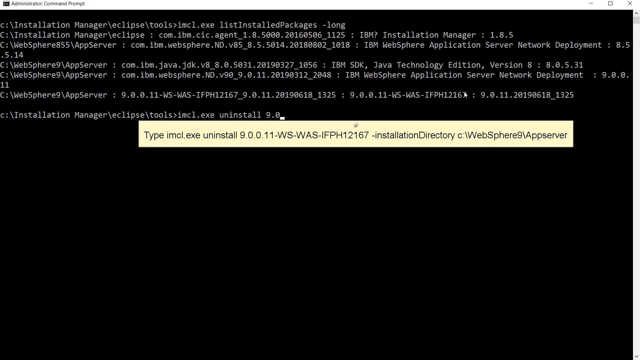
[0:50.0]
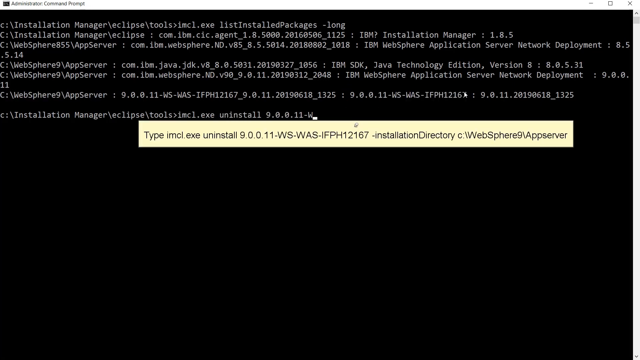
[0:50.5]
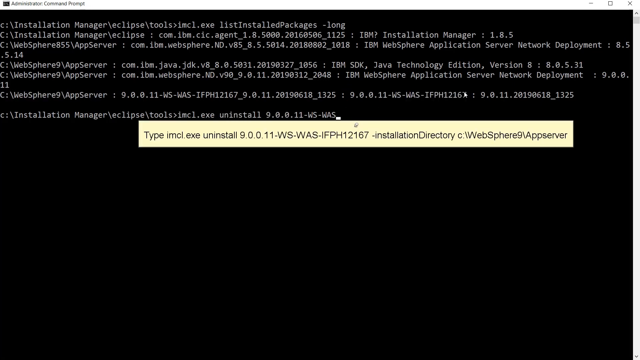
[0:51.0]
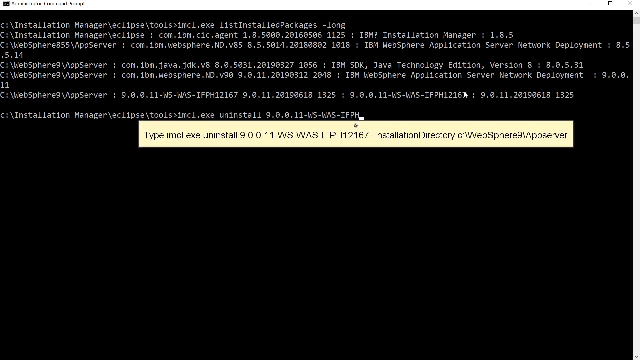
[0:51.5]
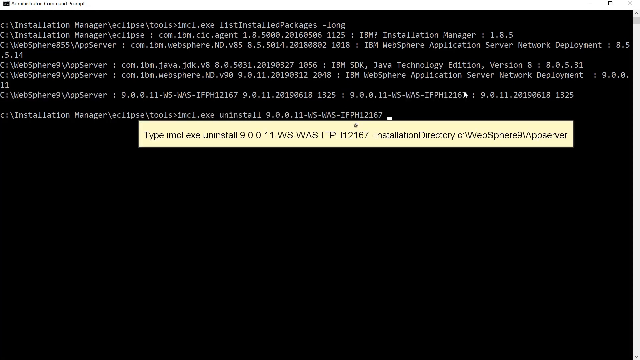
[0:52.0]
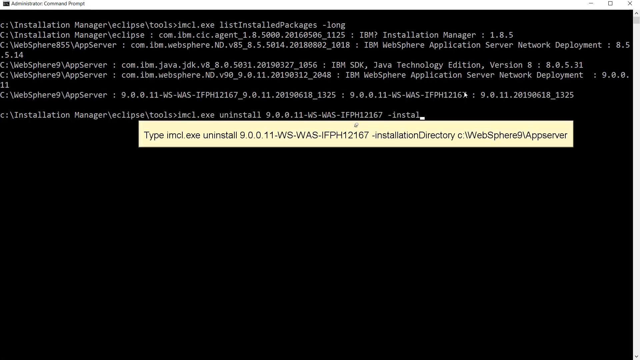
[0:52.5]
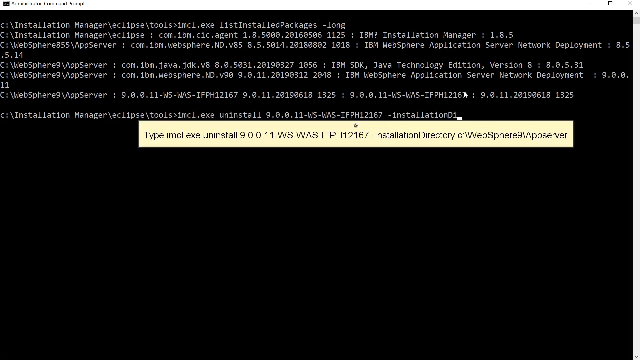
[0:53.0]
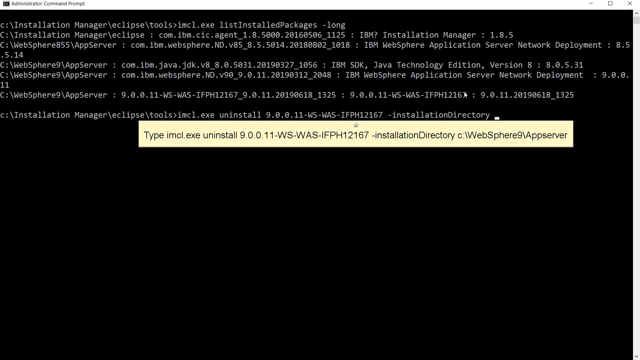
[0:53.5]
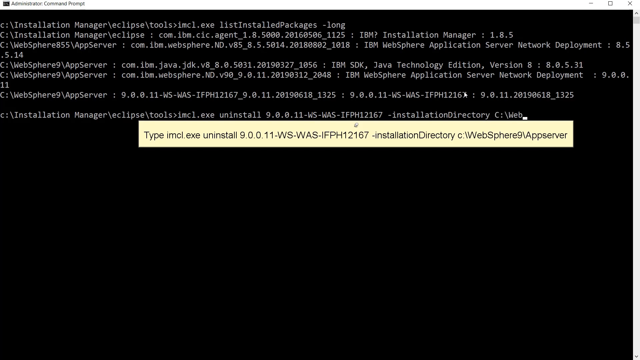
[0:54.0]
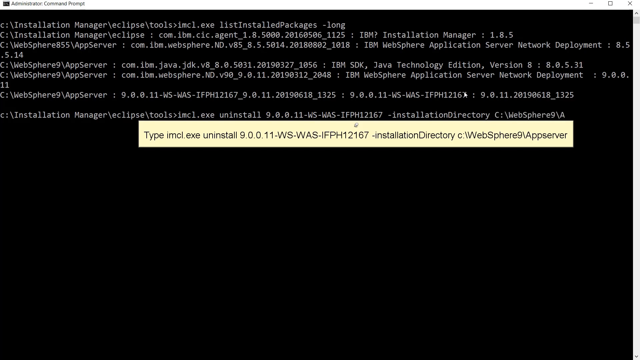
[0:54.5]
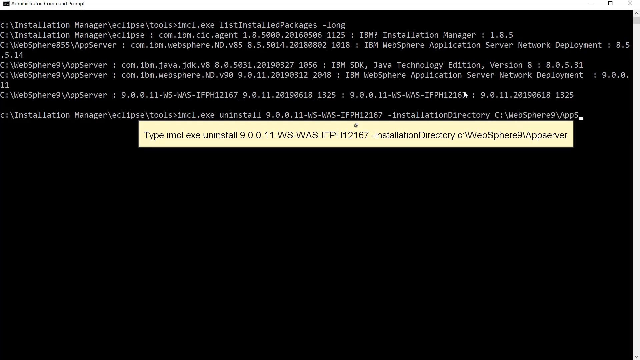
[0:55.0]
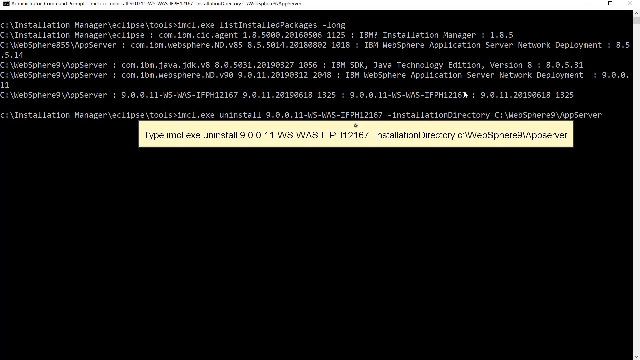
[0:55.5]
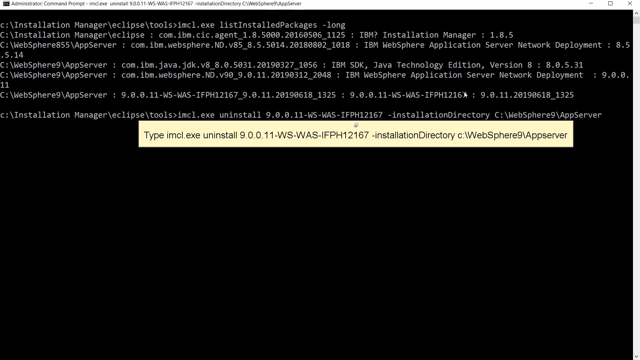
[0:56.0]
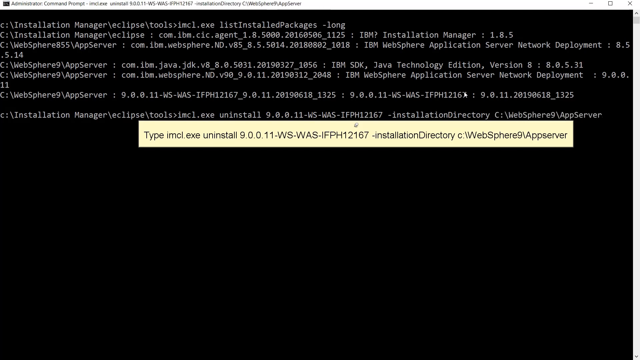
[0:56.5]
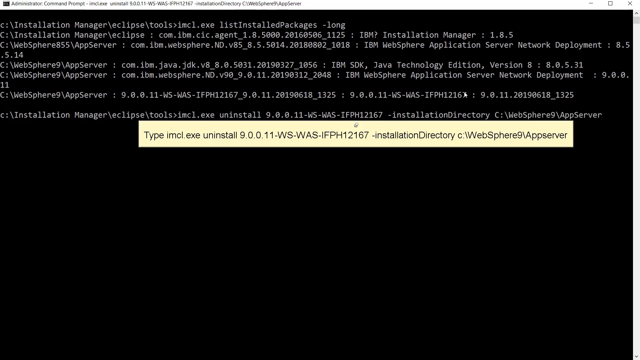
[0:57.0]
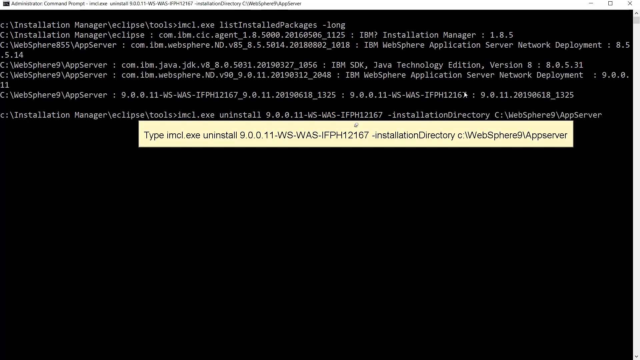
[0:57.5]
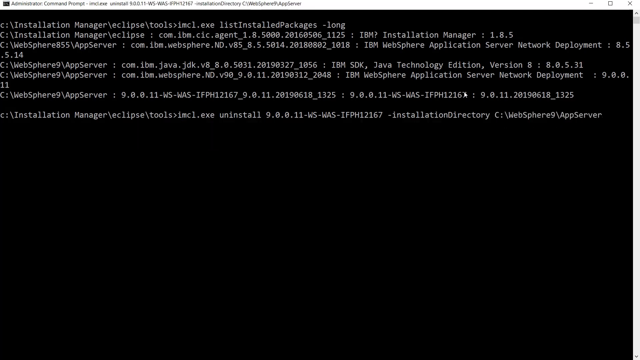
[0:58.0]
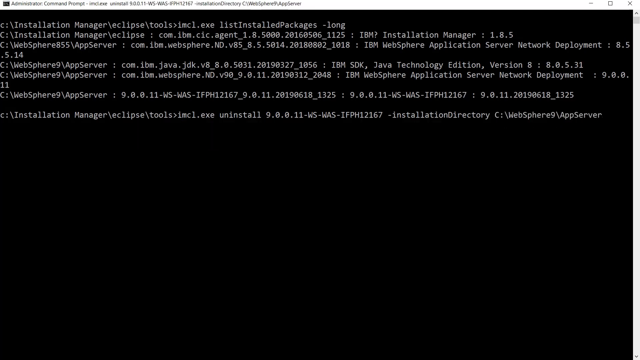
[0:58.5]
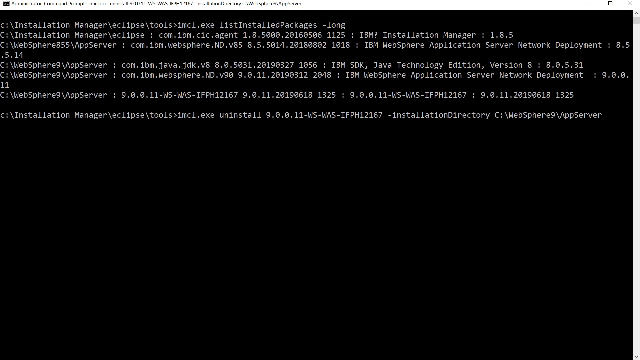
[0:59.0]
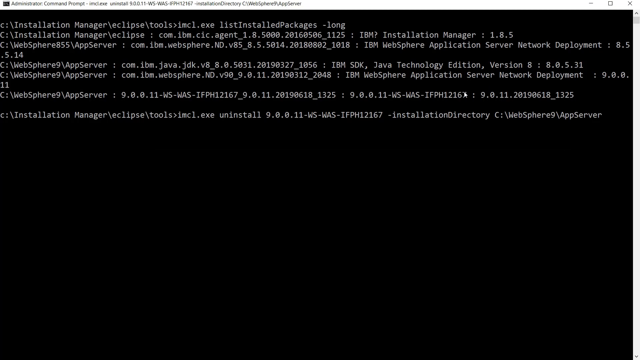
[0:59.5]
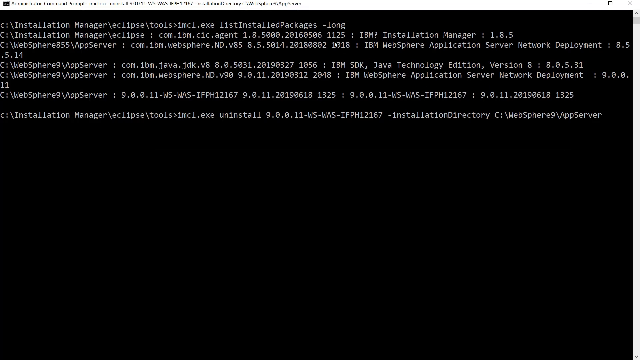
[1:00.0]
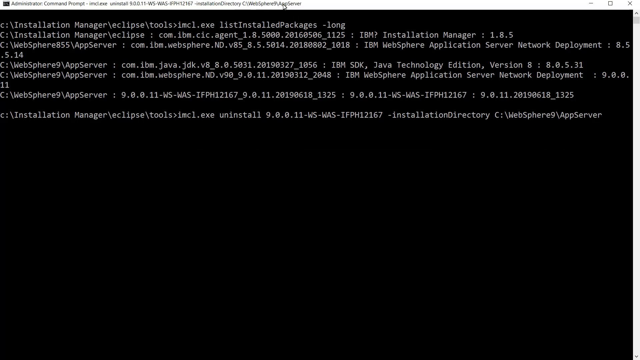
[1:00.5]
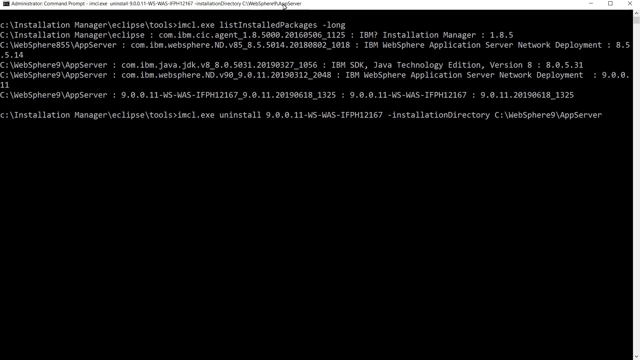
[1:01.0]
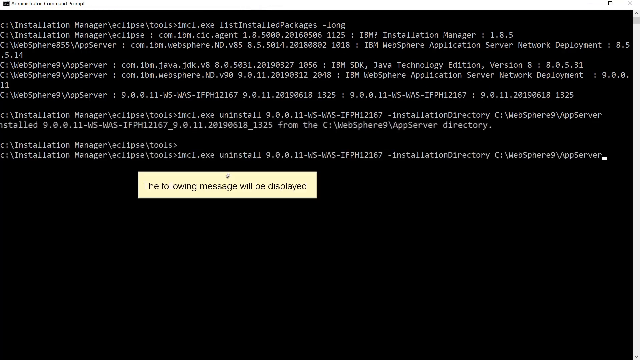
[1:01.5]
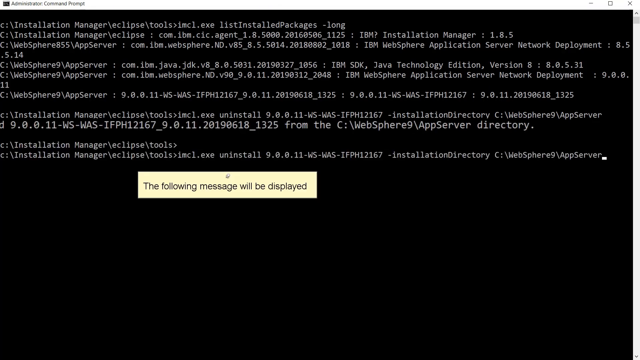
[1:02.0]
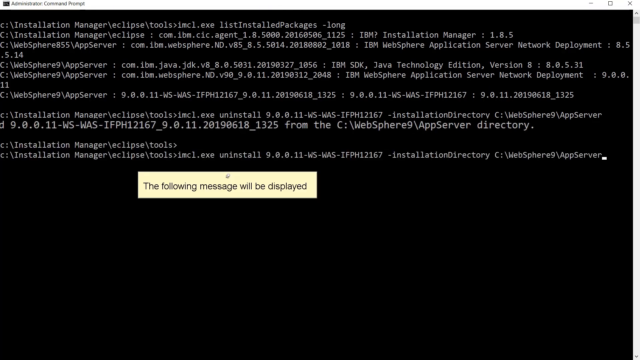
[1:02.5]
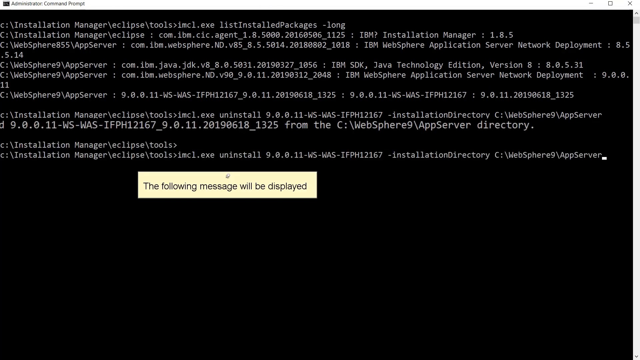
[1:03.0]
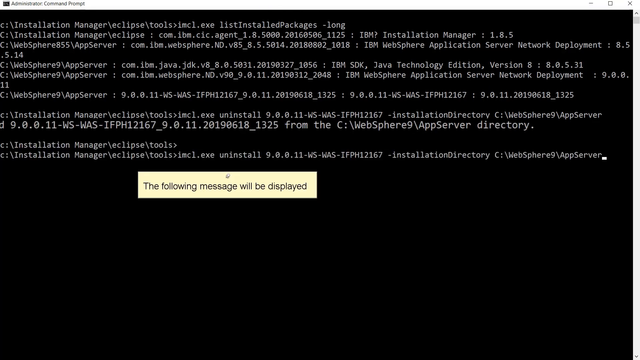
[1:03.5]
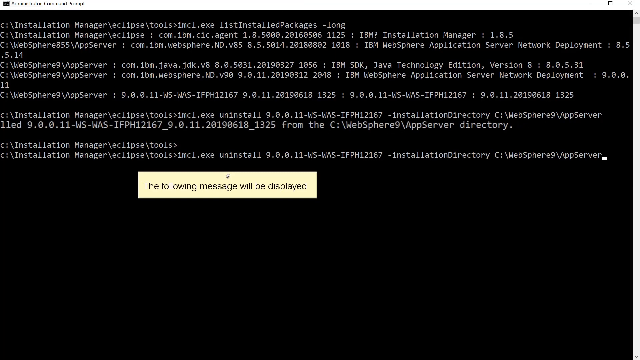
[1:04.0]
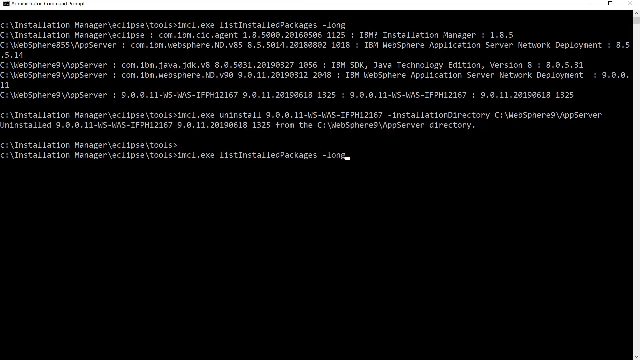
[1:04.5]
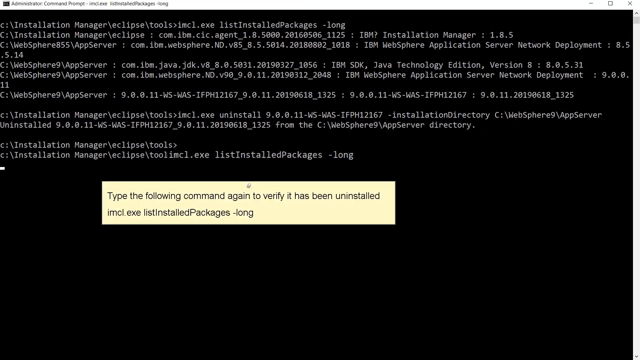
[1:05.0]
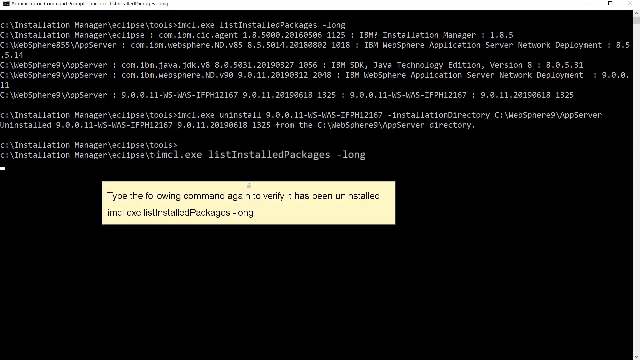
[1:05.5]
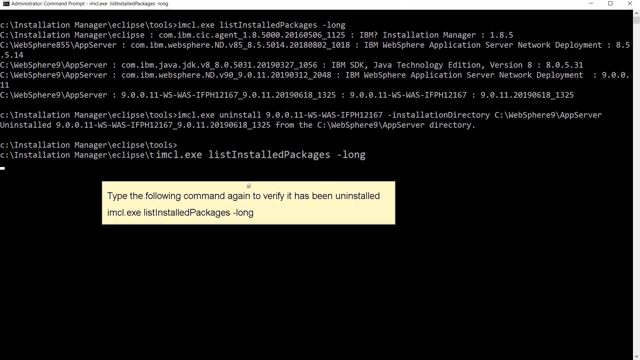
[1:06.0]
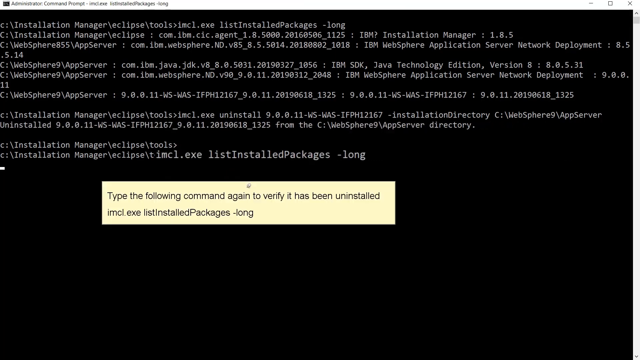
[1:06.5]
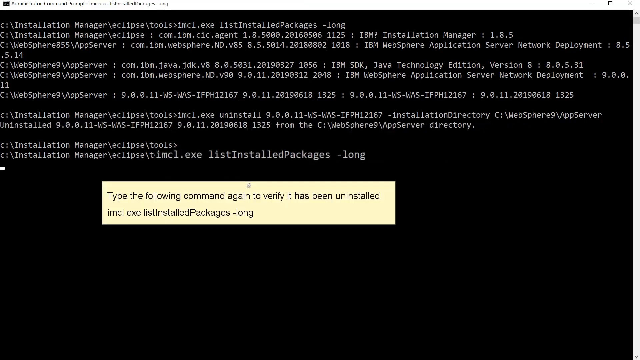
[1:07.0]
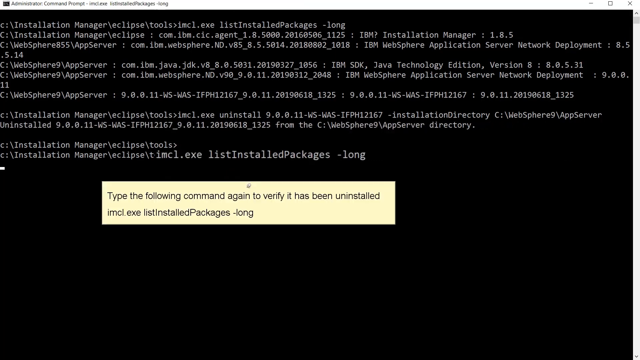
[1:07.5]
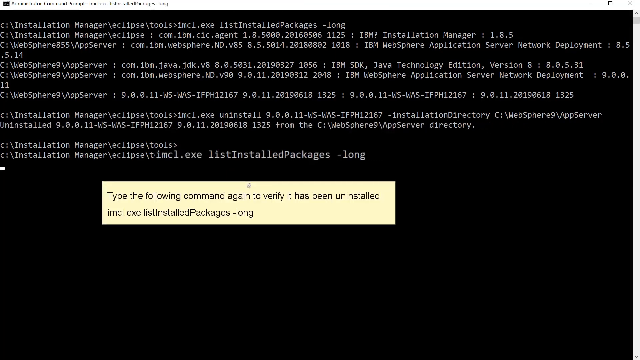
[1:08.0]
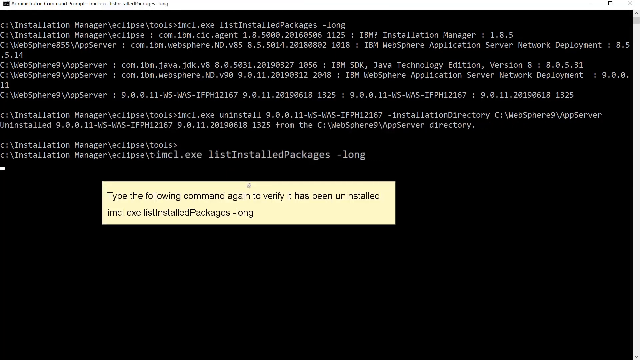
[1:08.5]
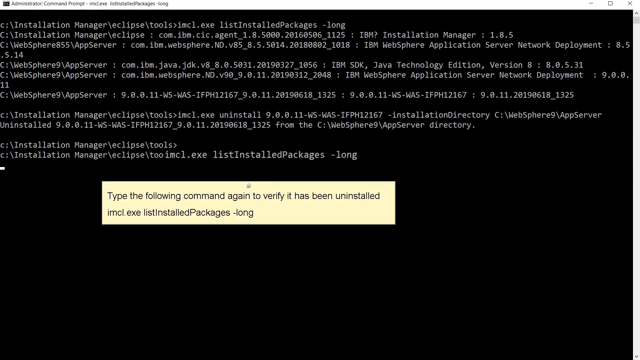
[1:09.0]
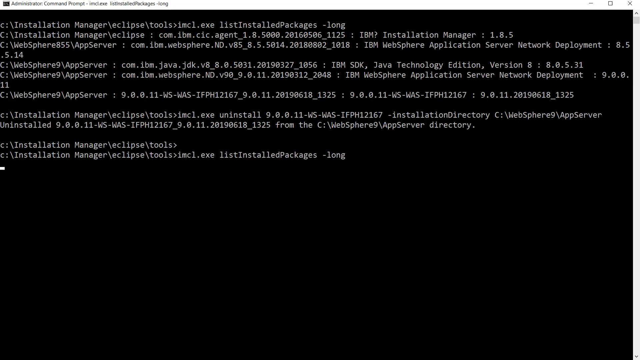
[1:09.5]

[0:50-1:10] The black screen continues, apparently showing an individual working on a computer. The highlighted cursor is visible, and text is being typed out, apparently some kind of programming, coding or algorithm. The inventory directory is being looked at, highlighted by a kind of yellowish-grayish box, as the cursor keeps highlighting and typing different words or programs into the directory. He moves up to the top of the screen, to what appears to be the address bar, where the time and little emojis are on the gray bar. The box is still down at the bottom of the screen.